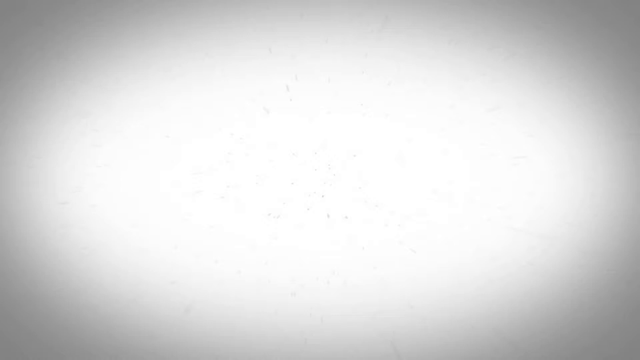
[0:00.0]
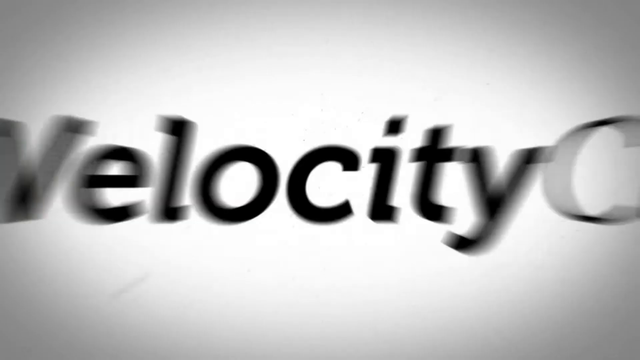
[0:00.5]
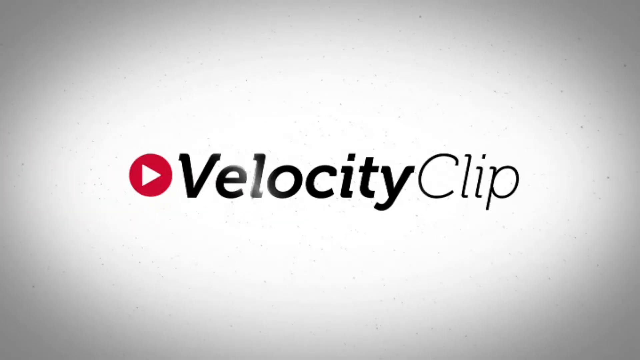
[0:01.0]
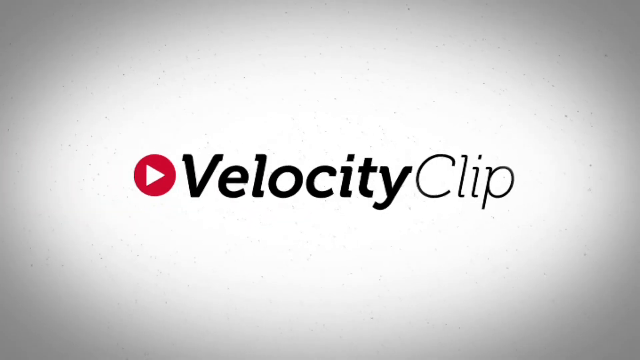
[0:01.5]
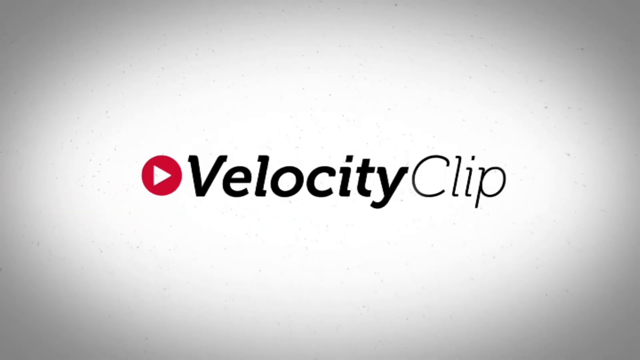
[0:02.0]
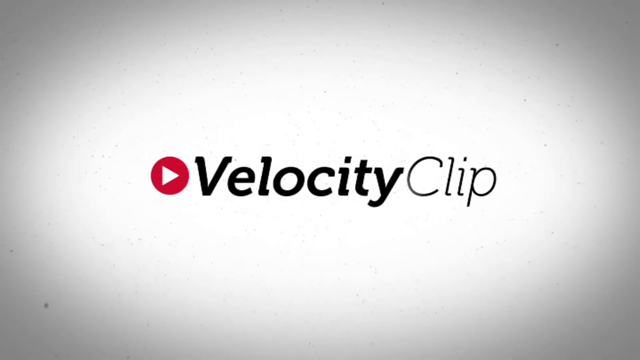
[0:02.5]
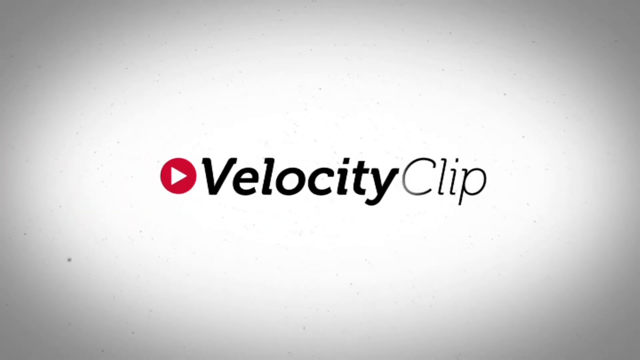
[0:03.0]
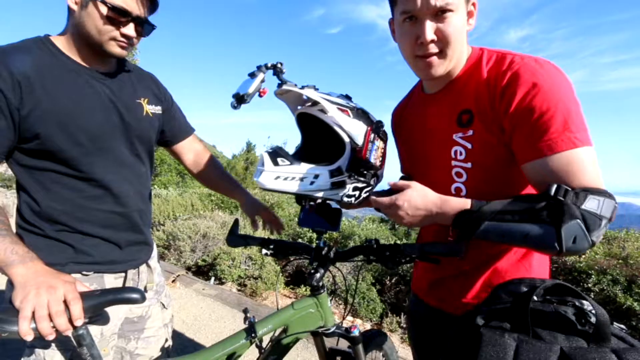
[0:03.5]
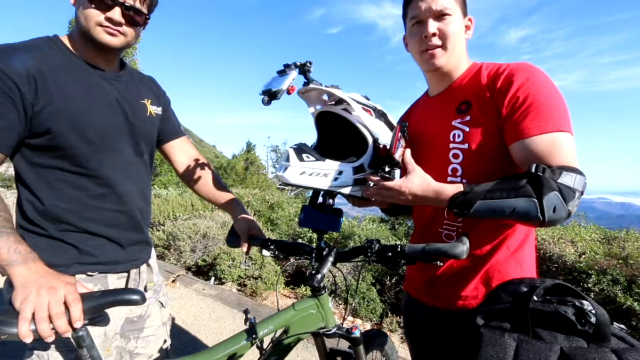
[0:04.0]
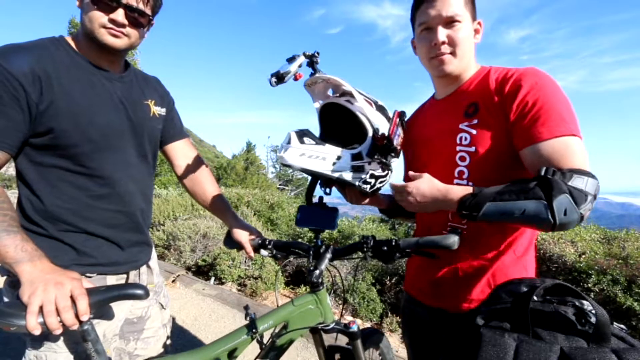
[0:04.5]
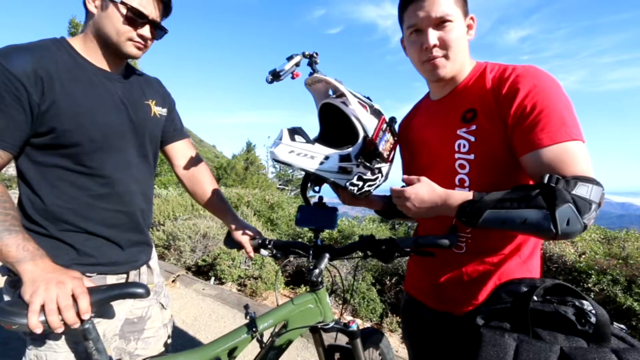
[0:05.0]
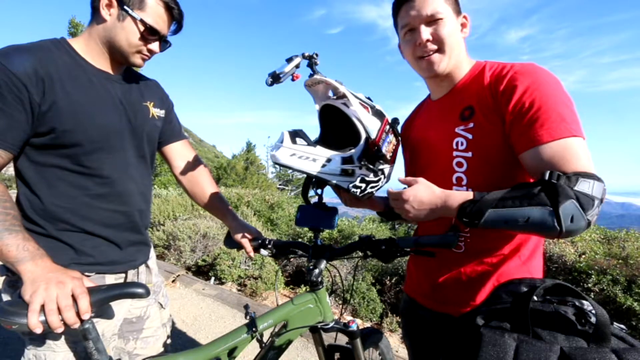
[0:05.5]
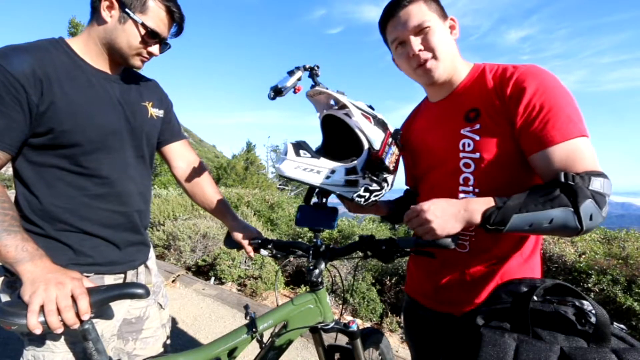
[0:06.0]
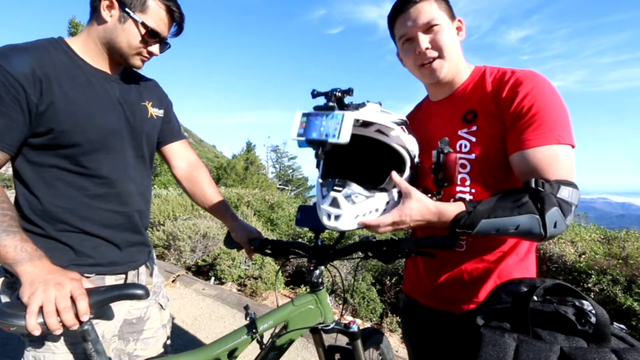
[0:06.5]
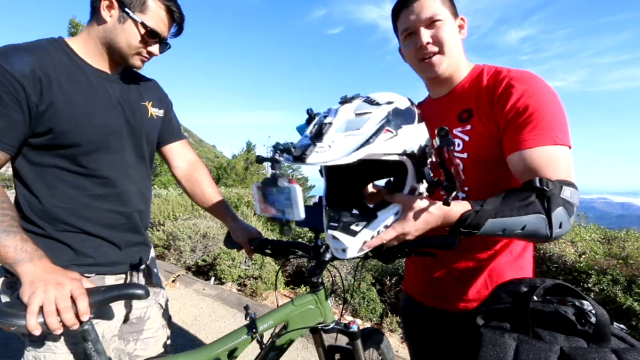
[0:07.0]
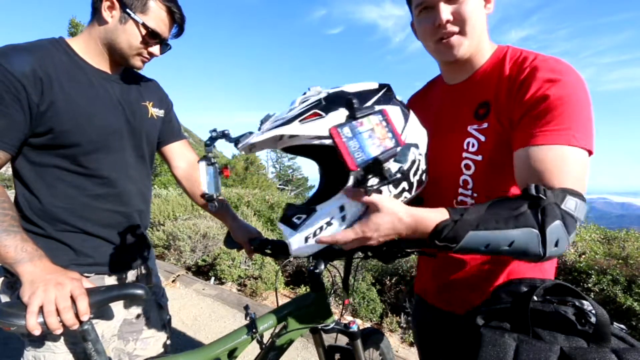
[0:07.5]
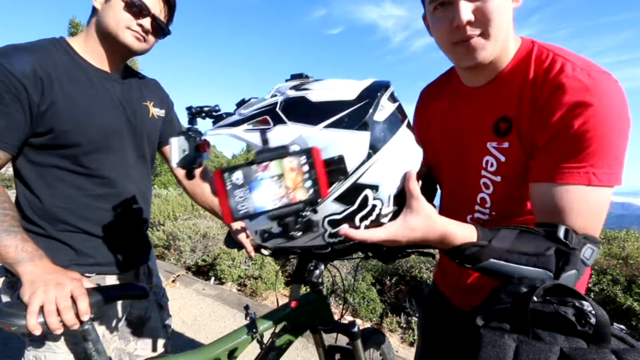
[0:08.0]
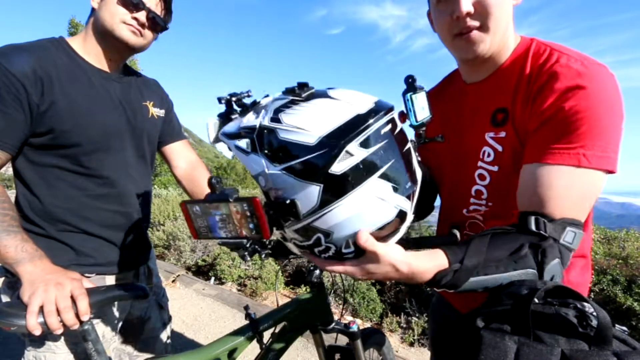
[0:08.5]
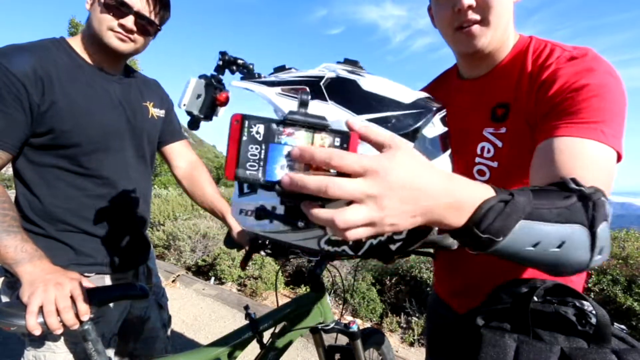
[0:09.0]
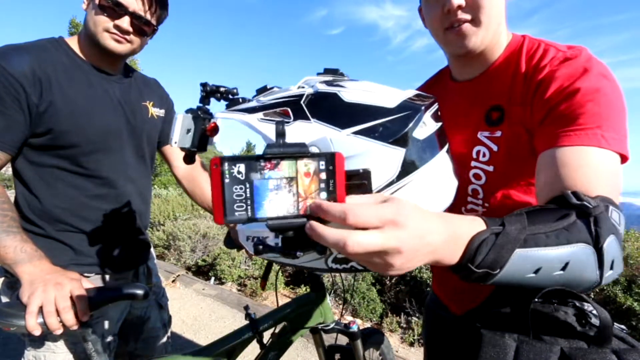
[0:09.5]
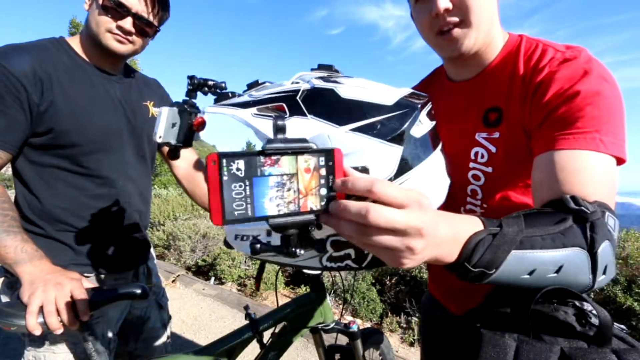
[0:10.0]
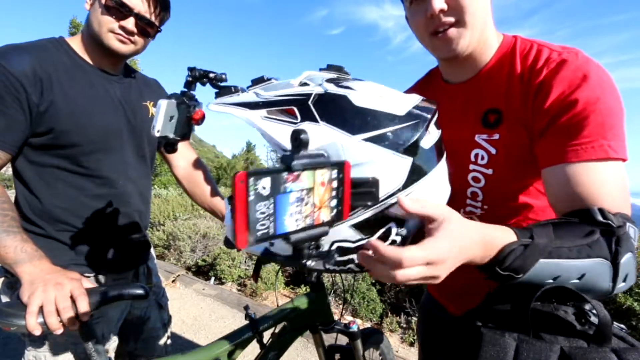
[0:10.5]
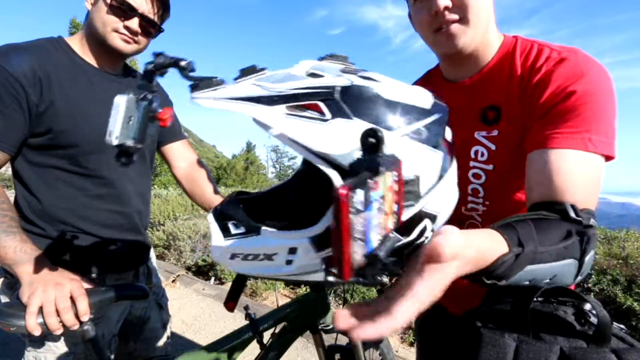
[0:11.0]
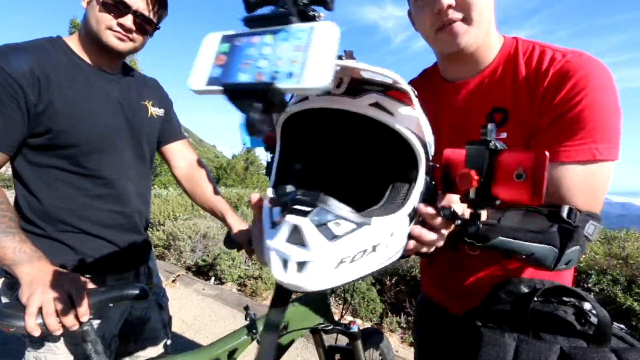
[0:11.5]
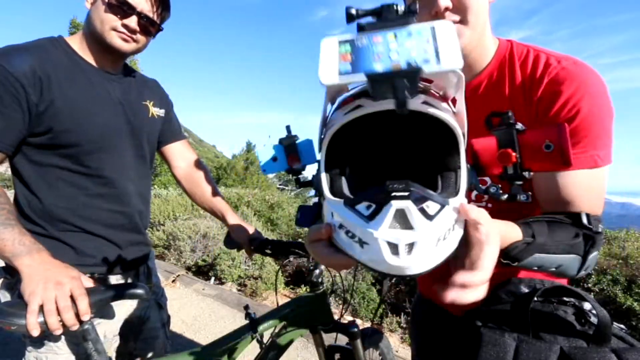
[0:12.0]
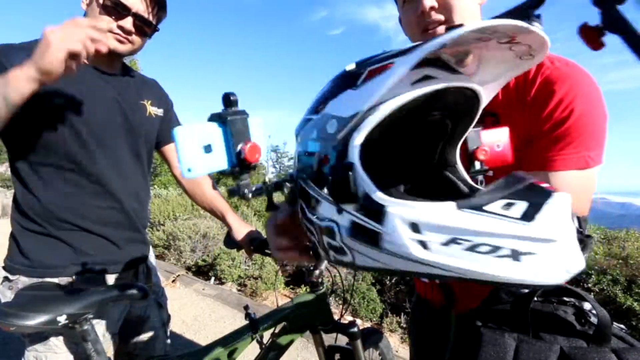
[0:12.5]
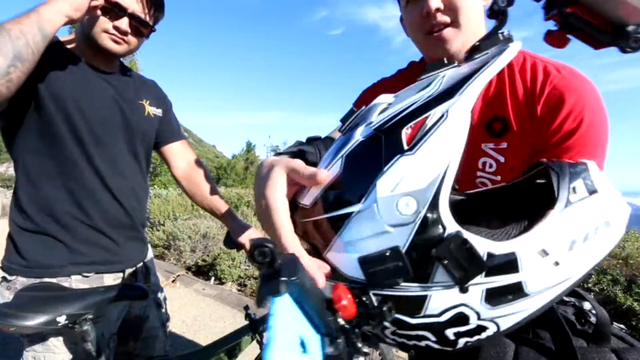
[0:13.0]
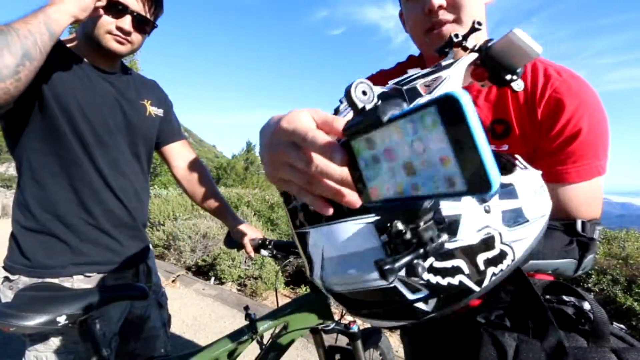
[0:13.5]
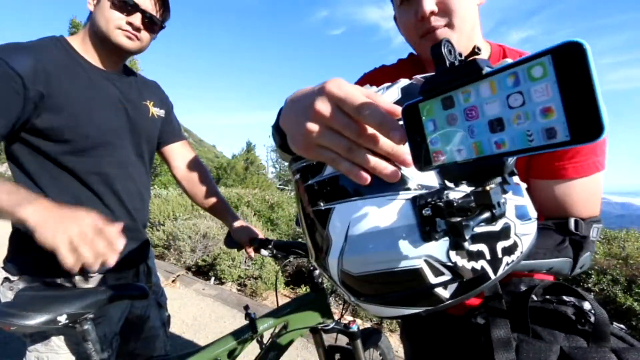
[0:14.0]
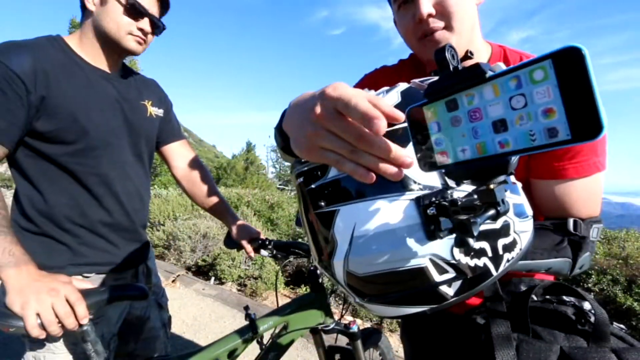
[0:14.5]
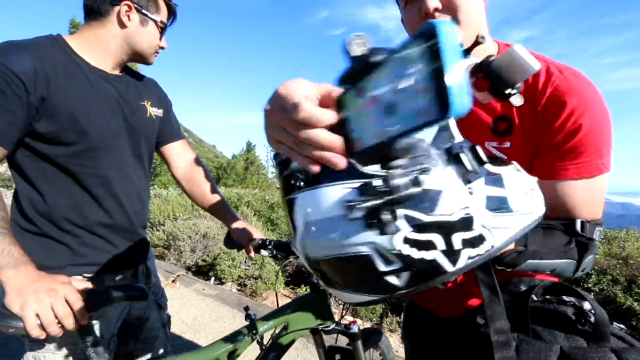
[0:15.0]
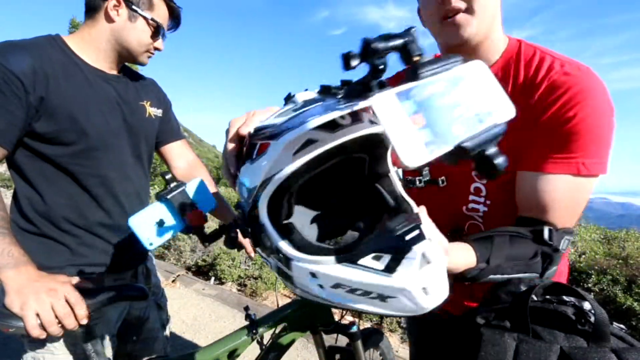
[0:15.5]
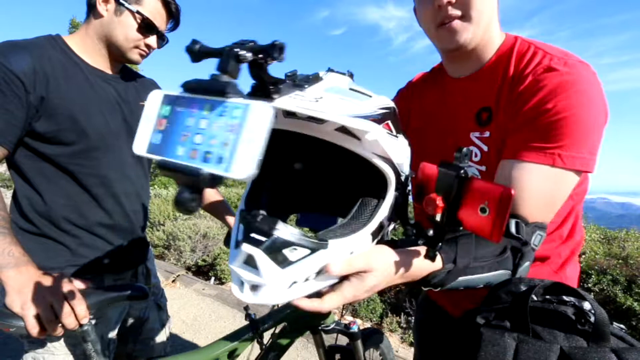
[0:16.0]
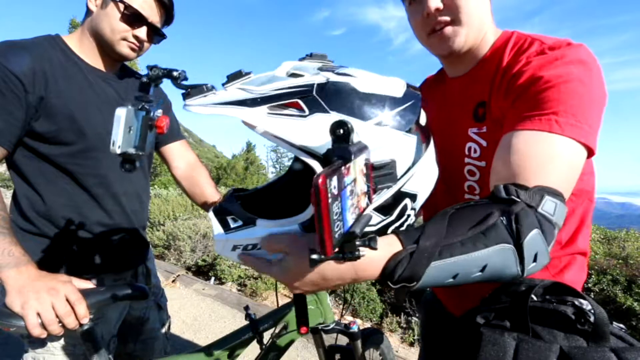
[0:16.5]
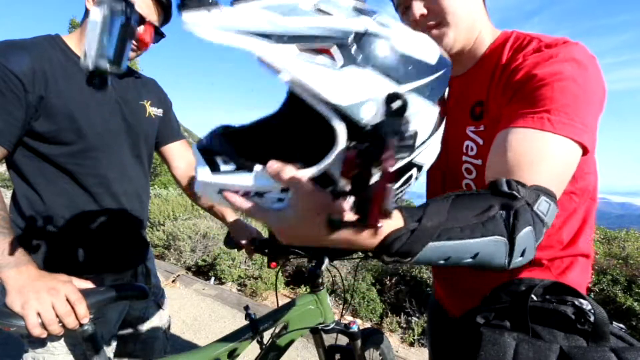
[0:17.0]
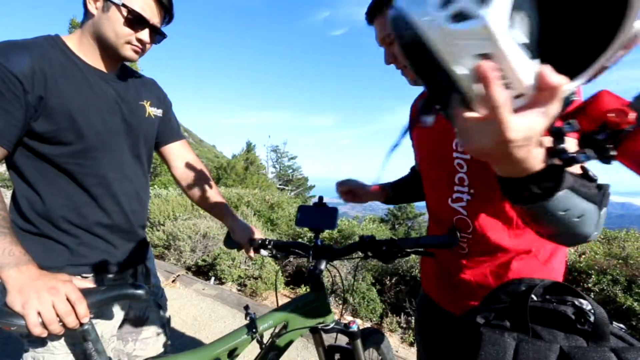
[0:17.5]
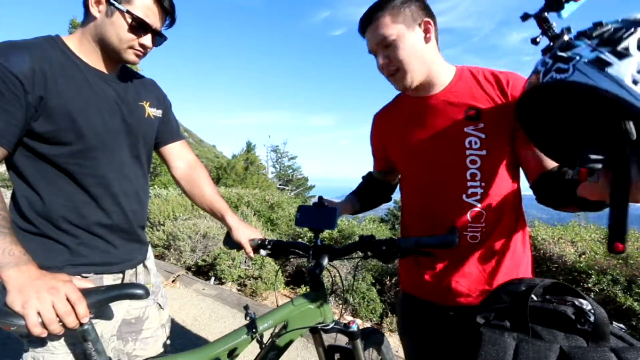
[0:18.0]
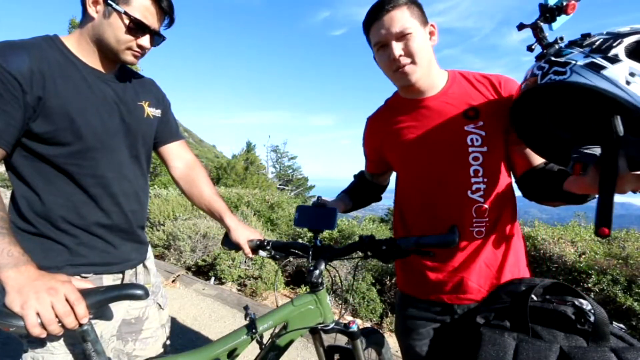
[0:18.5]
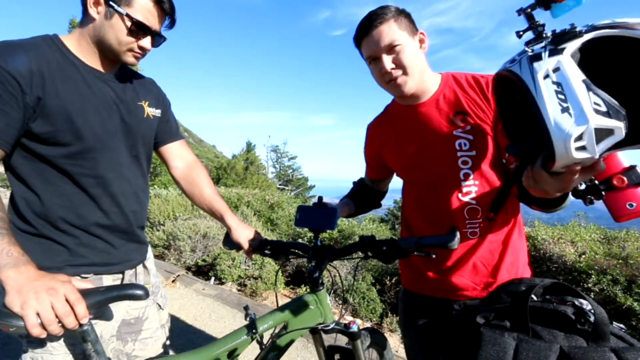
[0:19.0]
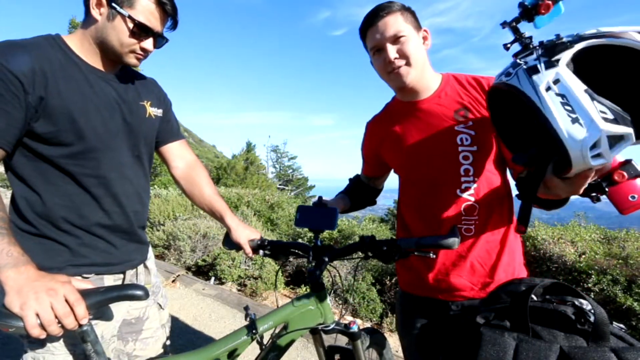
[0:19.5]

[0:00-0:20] The video opens on a white screen, and the YouTube play button, a red circle with a white arrow pointing right, pops up in the center. The word "velocity" appears in bold black text, followed by the word "clip" in regular thin black text. The scene then cuts to an outdoor shot of two young men who look to be in a mountainous area. In the far right background, mountains roll by, somewhat darker in color, and the mountain immediately to their left is filled with green, with some pine trees visible. The man on the left, perhaps in his late twenties, wears a black fitted t-shirt and is standing, holding on to the handles of a bike: his left hand grips the handlebar and his right hand grips the black seat. The man on the right wears a fitted red t-shirt and faces the camera. Both are Caucasian. The man on the right holds a helmet in his right hand; its face opening points left, and it is primarily white with red and black accents. It is a sunny day. The man in the red t-shirt shows the helmet, spinning it around to display three separate phones, each most likely with a camera.